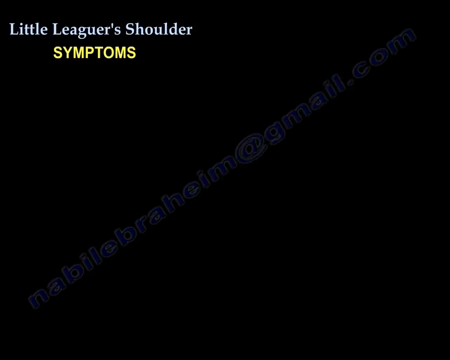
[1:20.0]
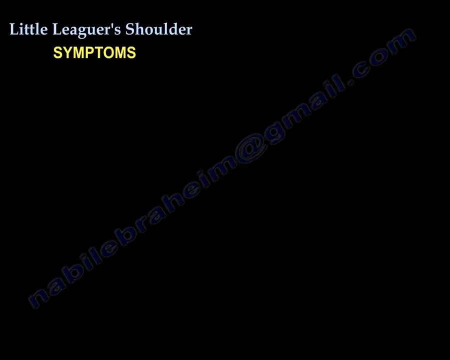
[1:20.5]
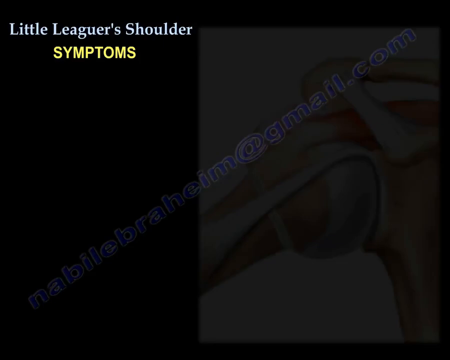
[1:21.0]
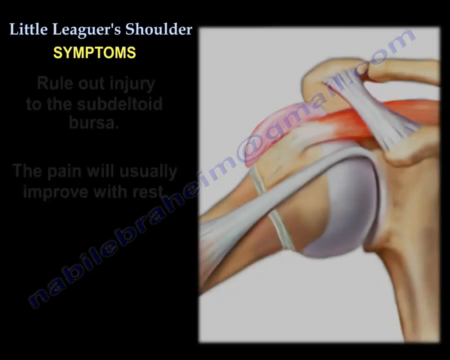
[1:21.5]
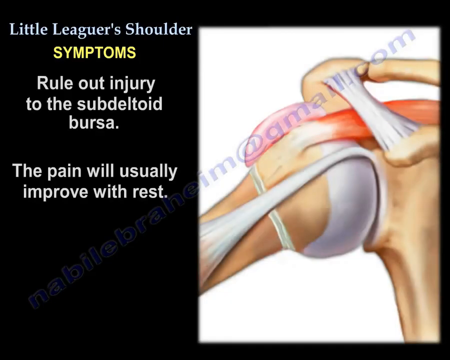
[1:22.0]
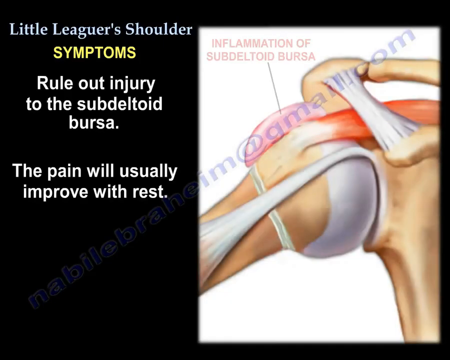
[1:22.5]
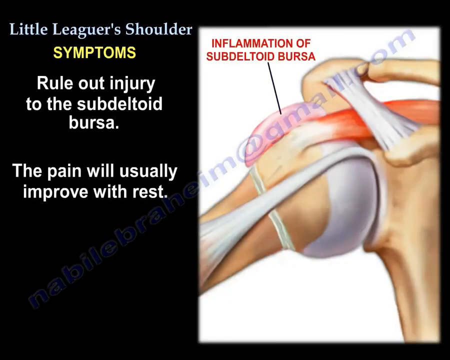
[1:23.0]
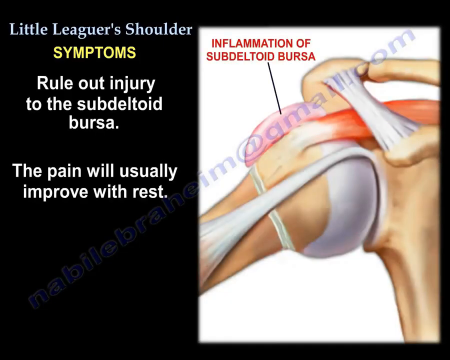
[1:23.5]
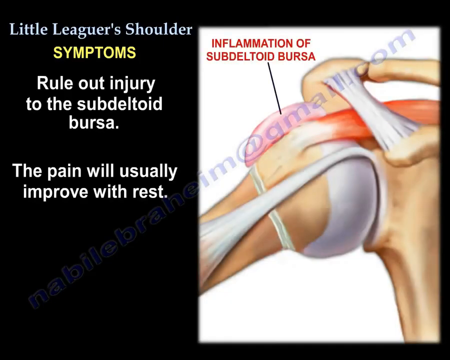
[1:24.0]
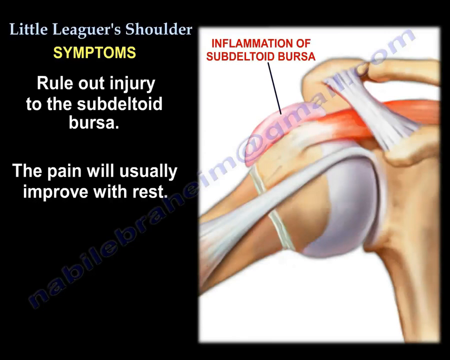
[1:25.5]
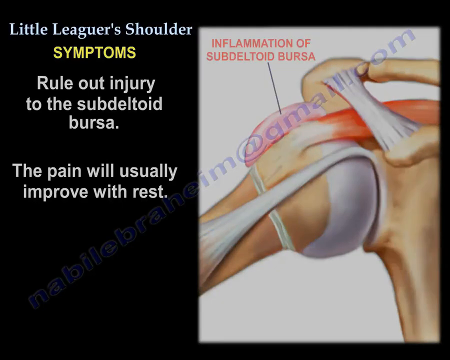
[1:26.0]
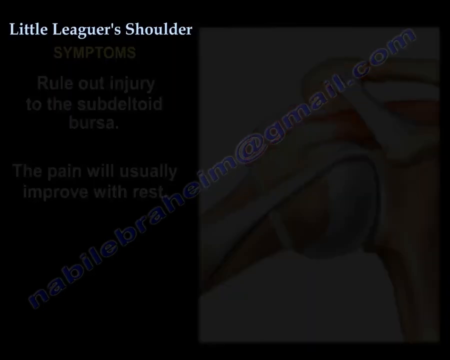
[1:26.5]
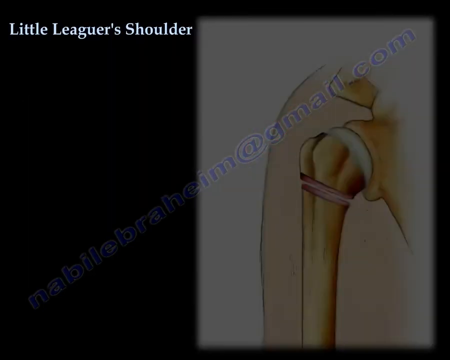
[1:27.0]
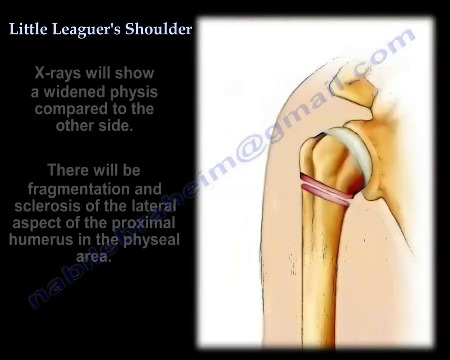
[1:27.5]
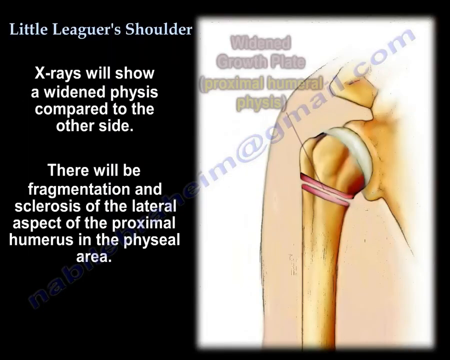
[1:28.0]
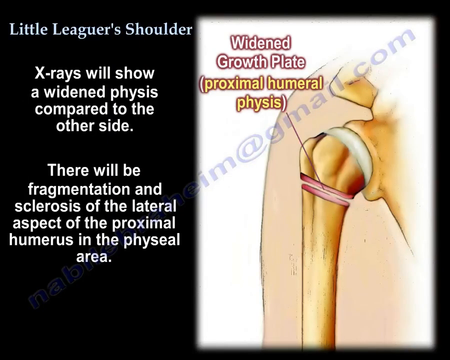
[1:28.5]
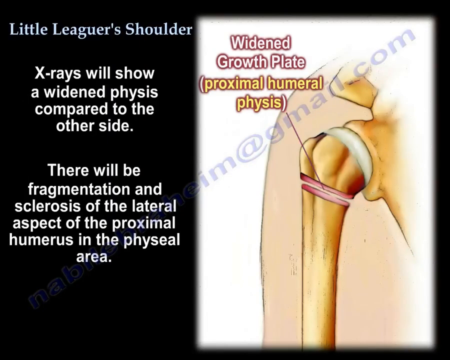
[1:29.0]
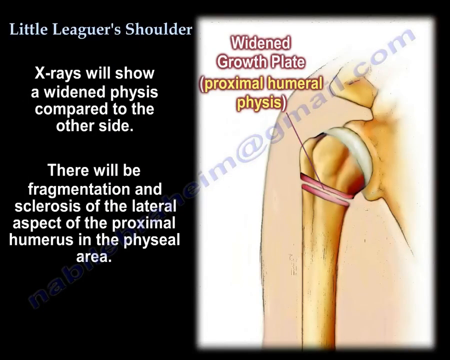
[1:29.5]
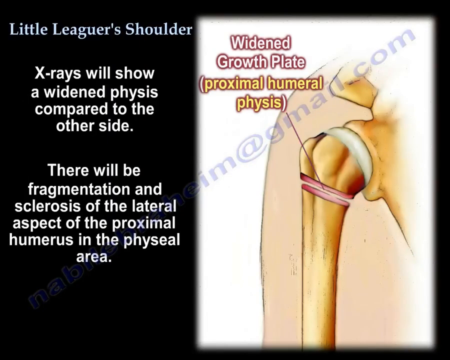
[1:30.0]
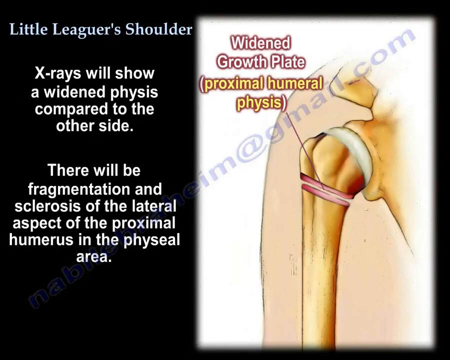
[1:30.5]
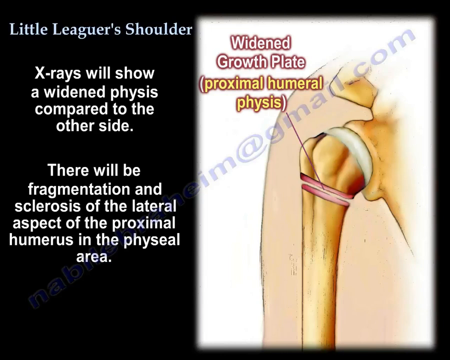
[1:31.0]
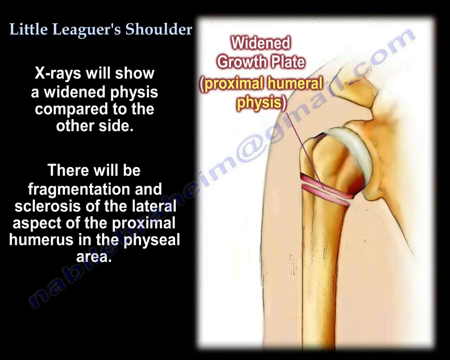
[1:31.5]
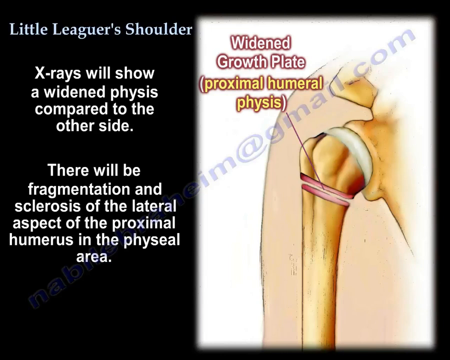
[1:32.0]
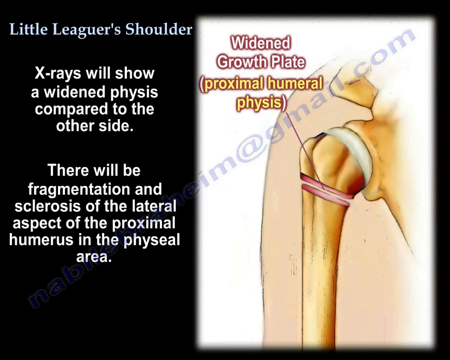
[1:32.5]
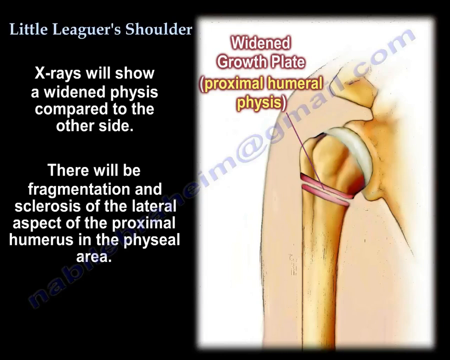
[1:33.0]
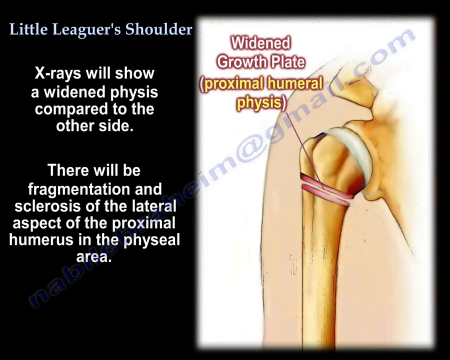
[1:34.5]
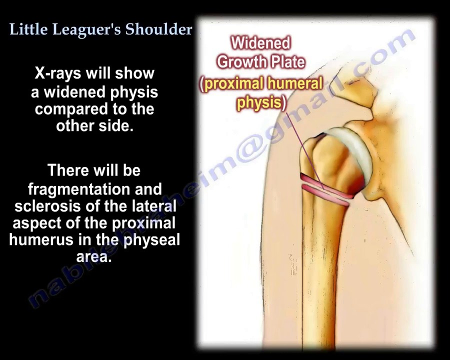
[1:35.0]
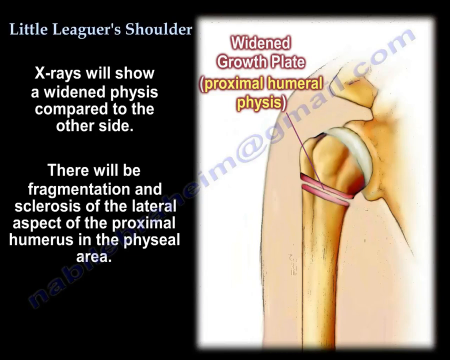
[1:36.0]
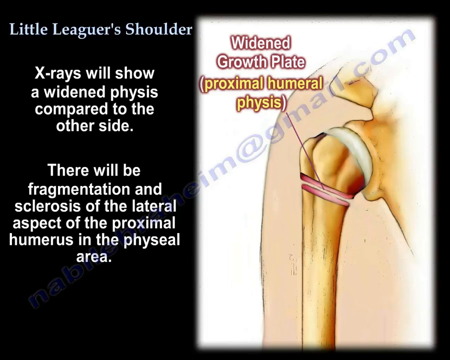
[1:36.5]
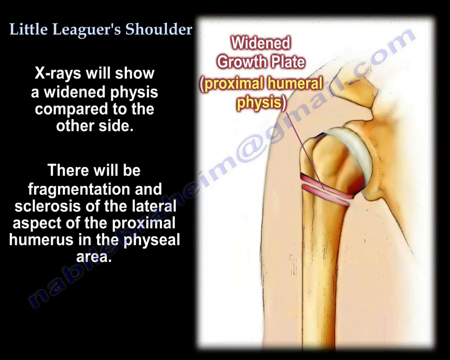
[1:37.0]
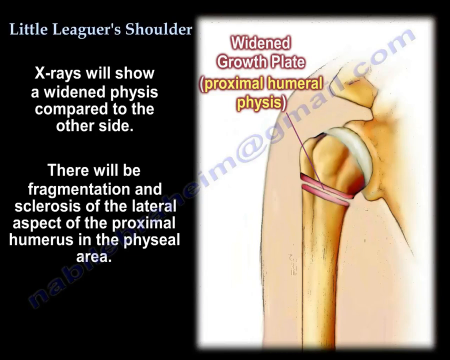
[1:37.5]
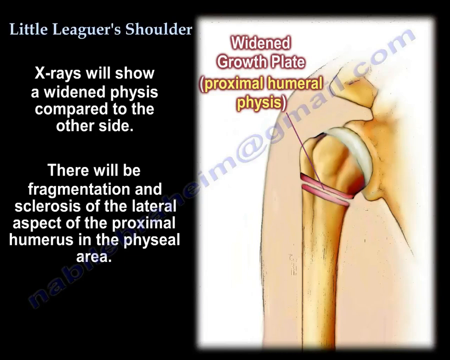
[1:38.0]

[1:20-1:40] On the right-hand side of the screen is a close-up animated graphic of a shoulder socket, with red uppercase letters reading "inflammation of sub deltoid bursa" and a line pointing to the injured area. At the top left, blue letters read "little leaguer shoulder", and below that, in all uppercase yellow letters, "symptoms". Below this it reads "rule out injury to the sub deltoid bursa. The pain will usually improve with rest." The view then cuts to a new screen with a close-up diagram of the shoulder, again labeled "widened growth plate, proximal humeral physis" with an arrow pointing to this area. On the left-hand side, "little leaguer shoulder" is at the top in blue letters, and below that it reads "x-rays will show a widened physis compared to the other side. There will be fragmentation and sclerosis of the lateral aspect of the proximal humerus in the physial area."